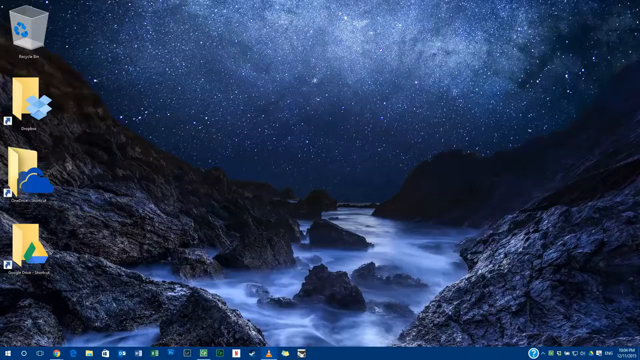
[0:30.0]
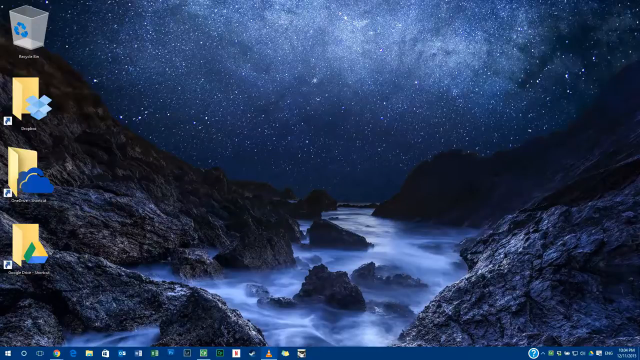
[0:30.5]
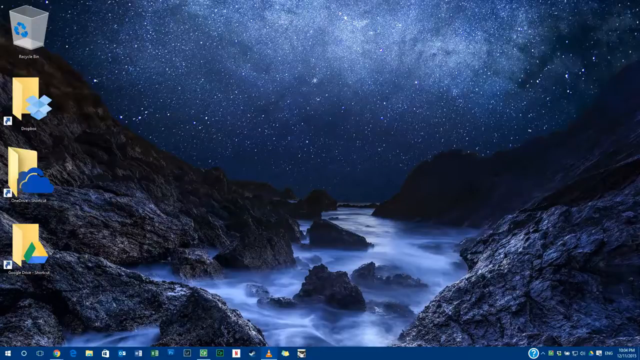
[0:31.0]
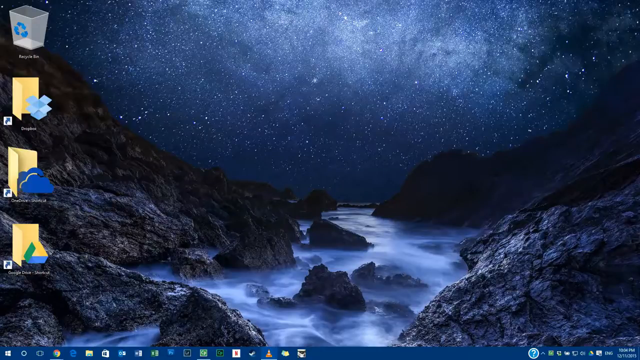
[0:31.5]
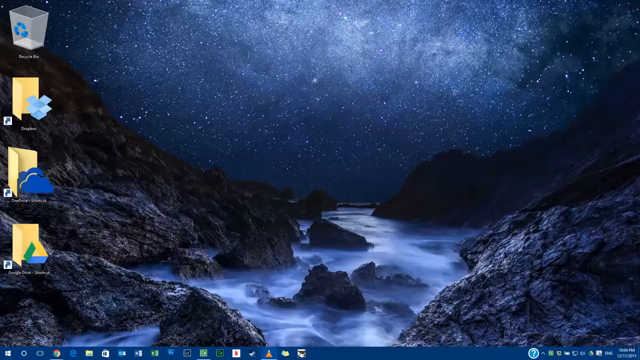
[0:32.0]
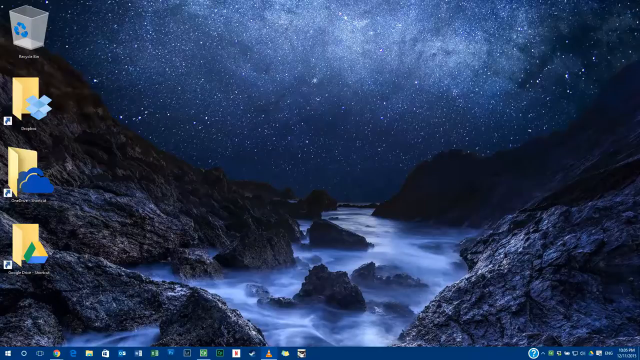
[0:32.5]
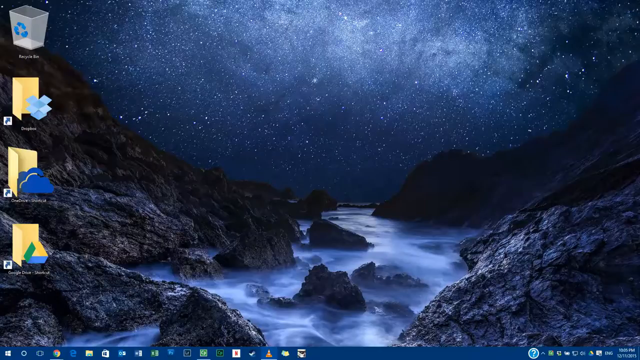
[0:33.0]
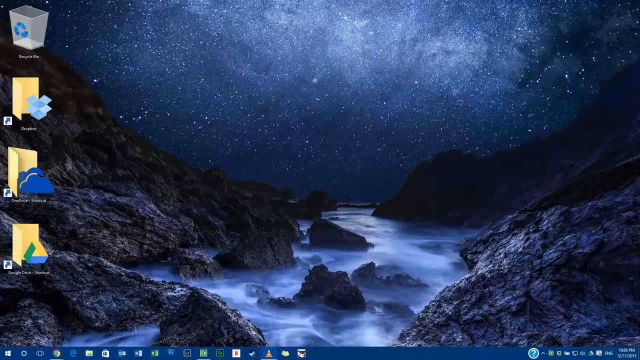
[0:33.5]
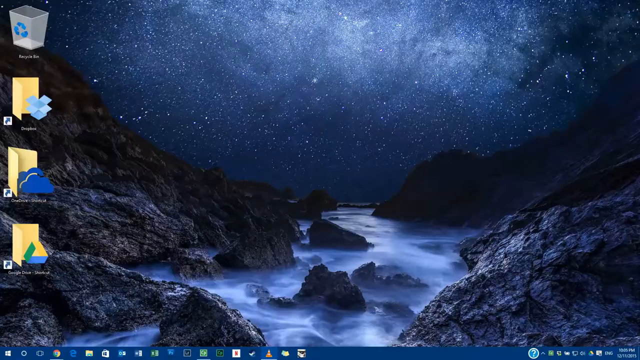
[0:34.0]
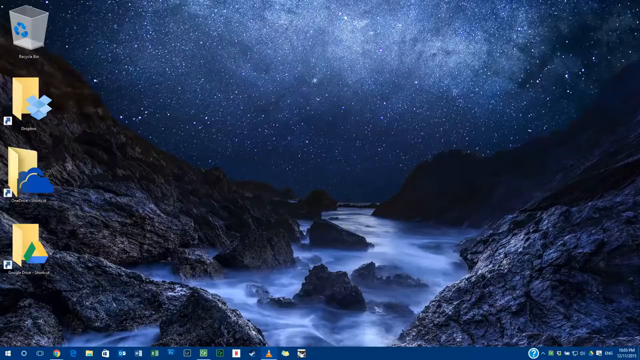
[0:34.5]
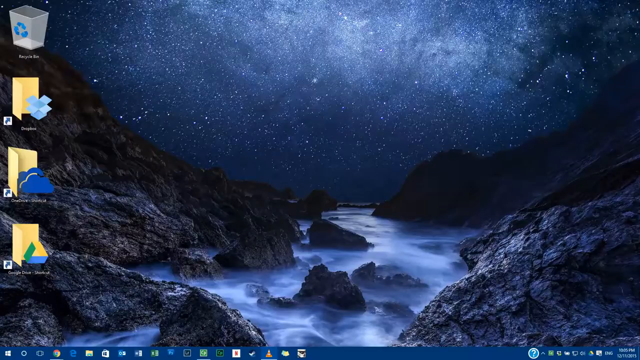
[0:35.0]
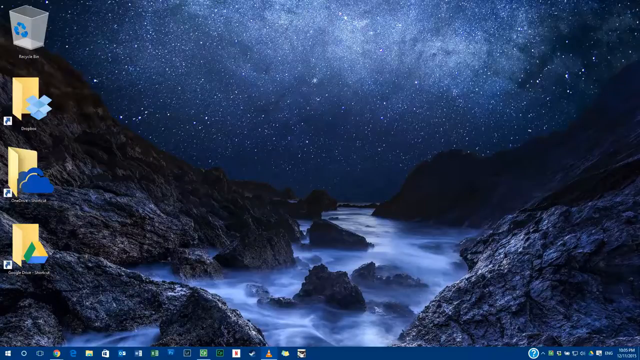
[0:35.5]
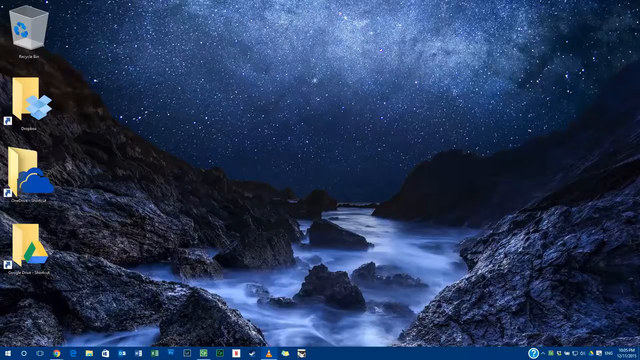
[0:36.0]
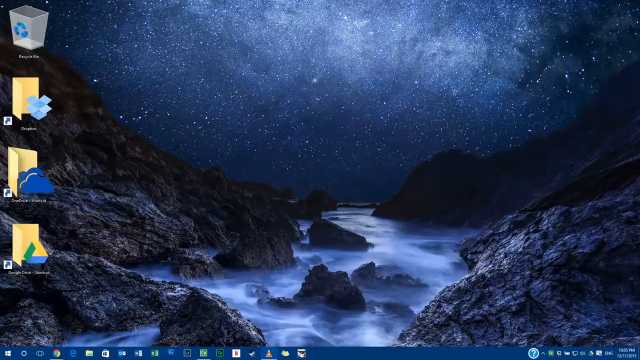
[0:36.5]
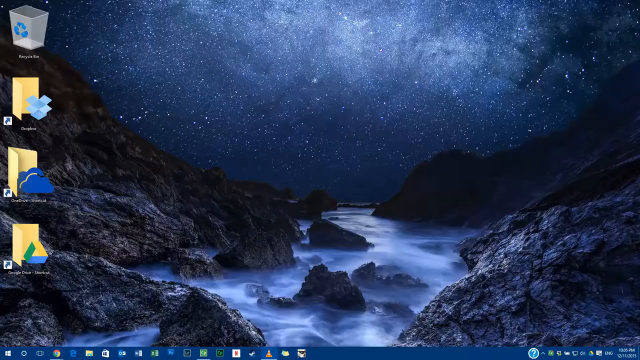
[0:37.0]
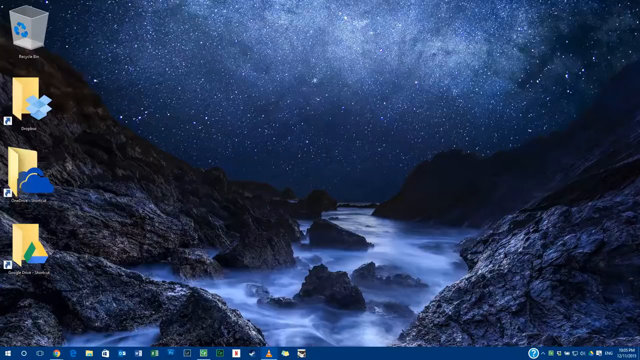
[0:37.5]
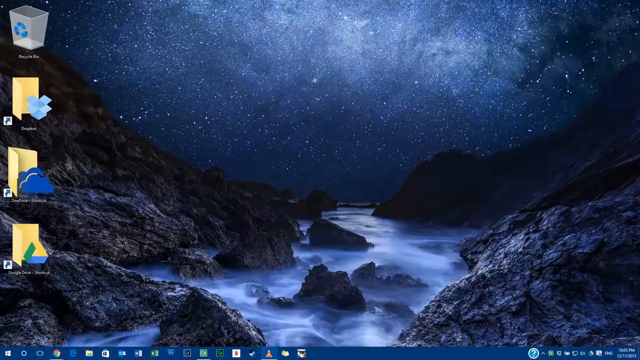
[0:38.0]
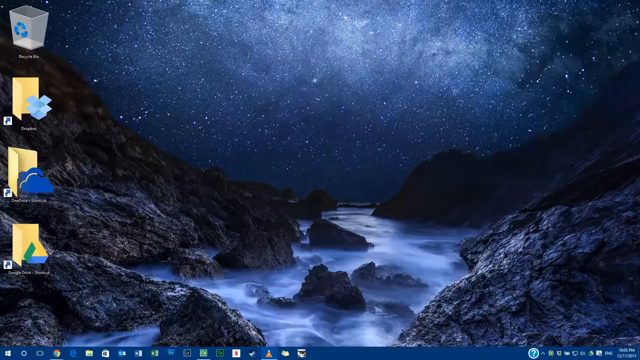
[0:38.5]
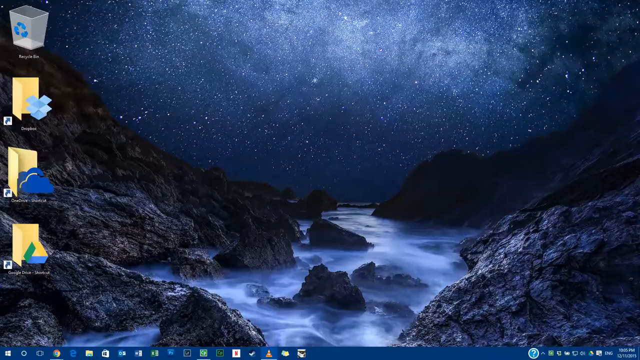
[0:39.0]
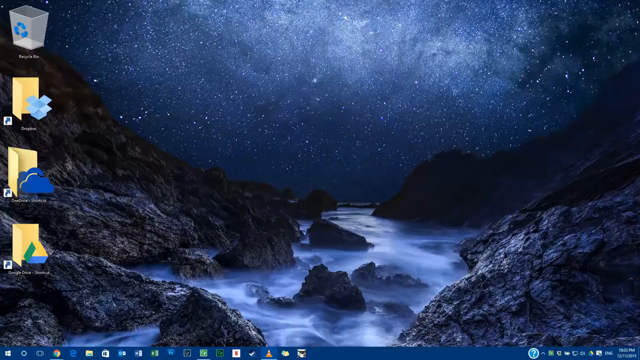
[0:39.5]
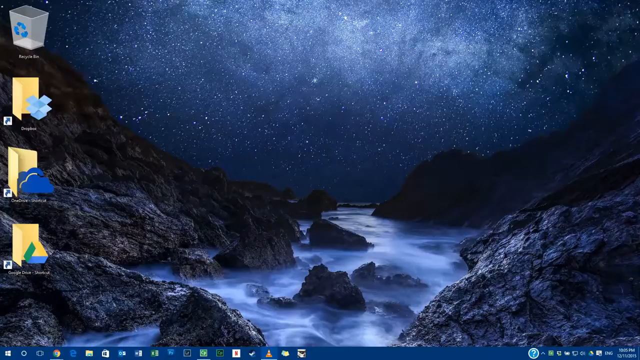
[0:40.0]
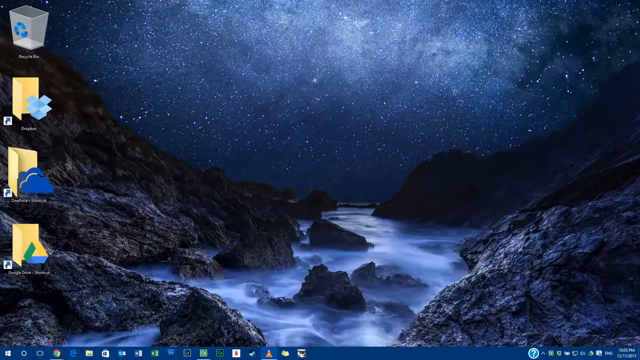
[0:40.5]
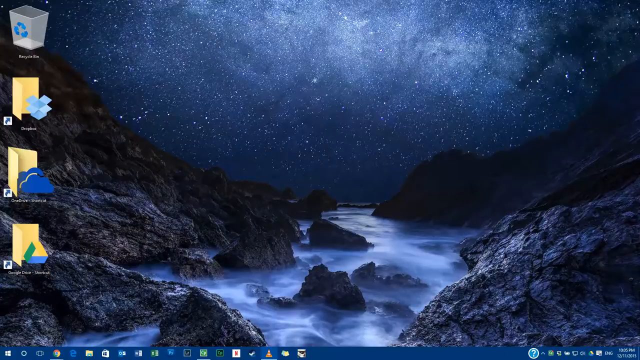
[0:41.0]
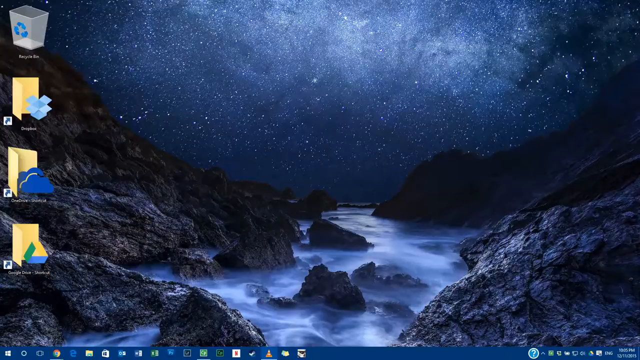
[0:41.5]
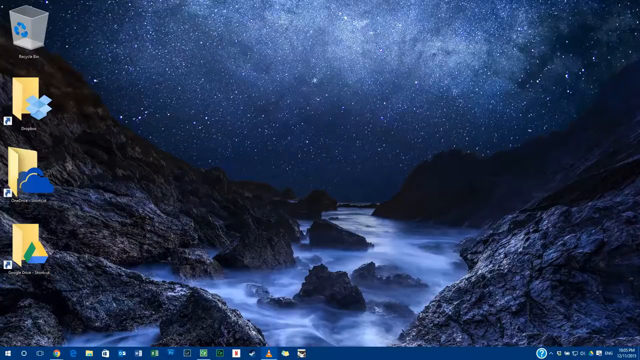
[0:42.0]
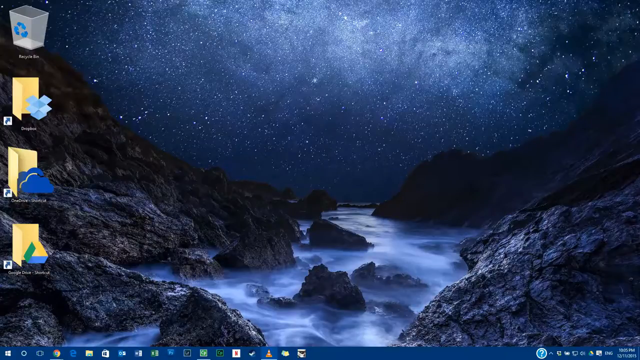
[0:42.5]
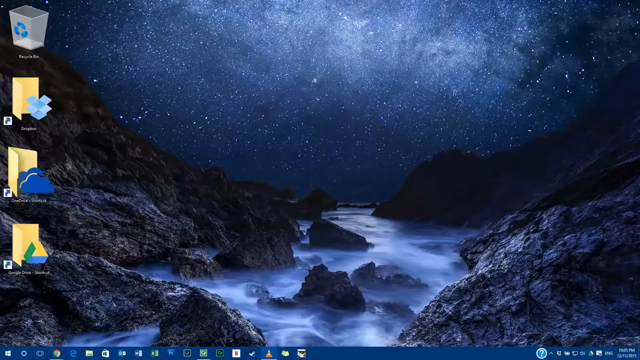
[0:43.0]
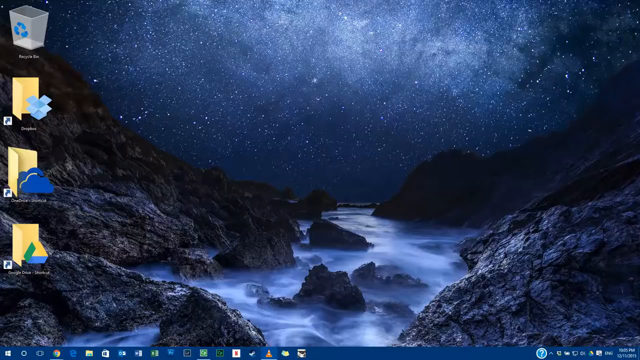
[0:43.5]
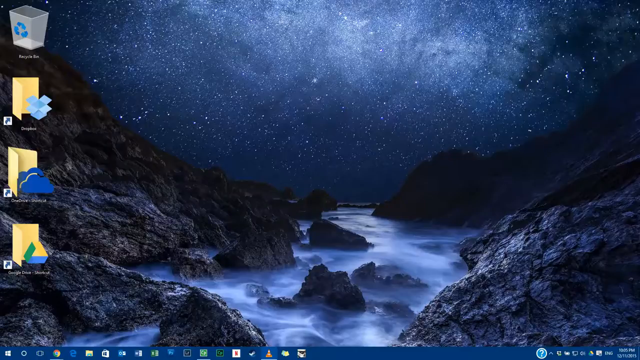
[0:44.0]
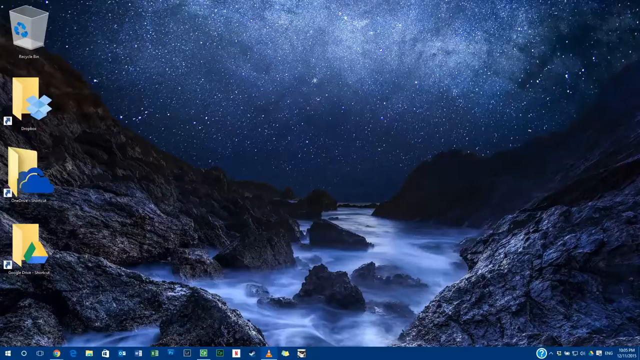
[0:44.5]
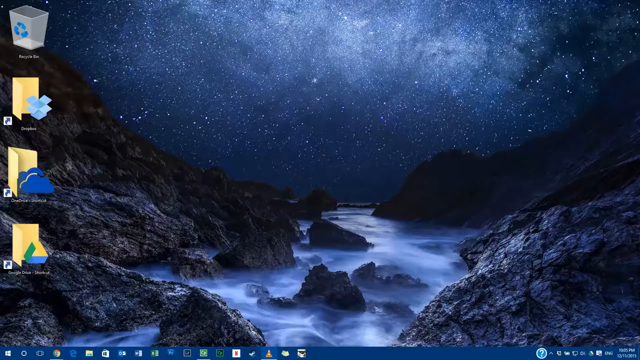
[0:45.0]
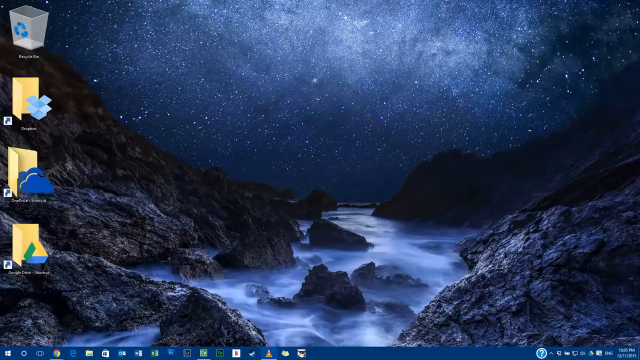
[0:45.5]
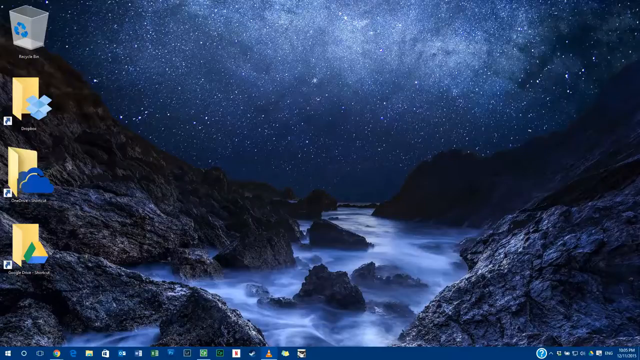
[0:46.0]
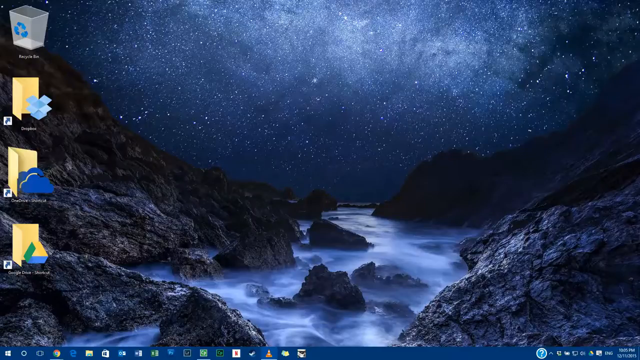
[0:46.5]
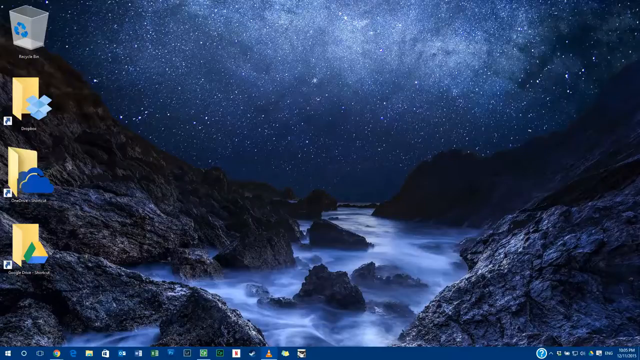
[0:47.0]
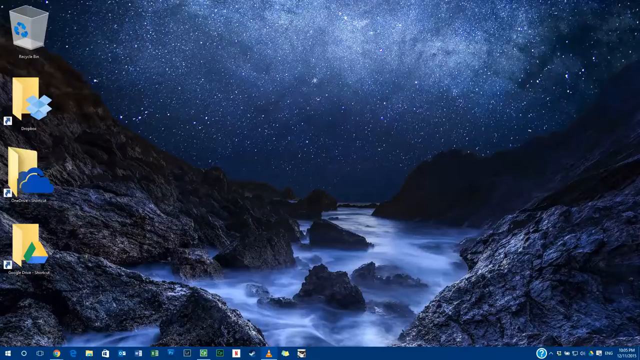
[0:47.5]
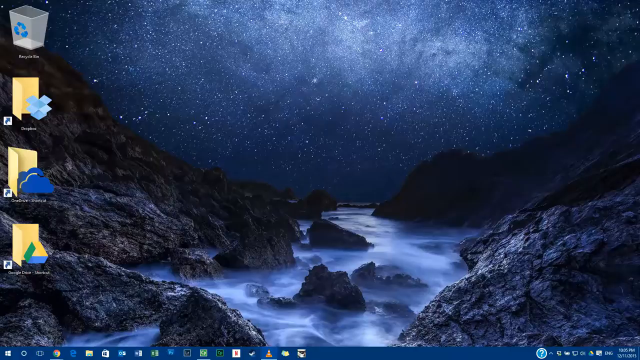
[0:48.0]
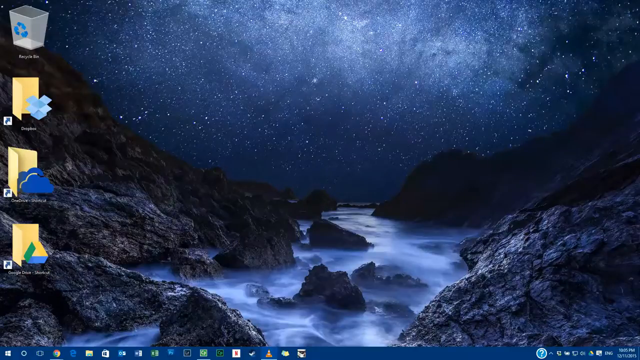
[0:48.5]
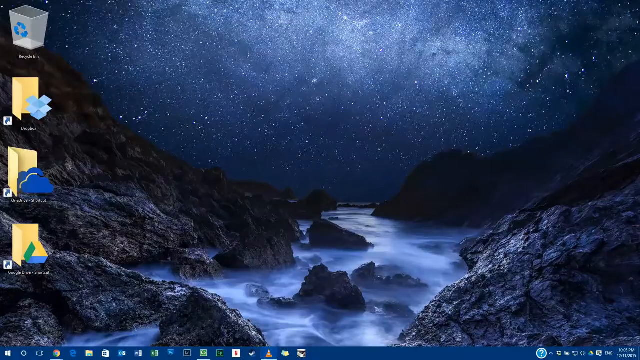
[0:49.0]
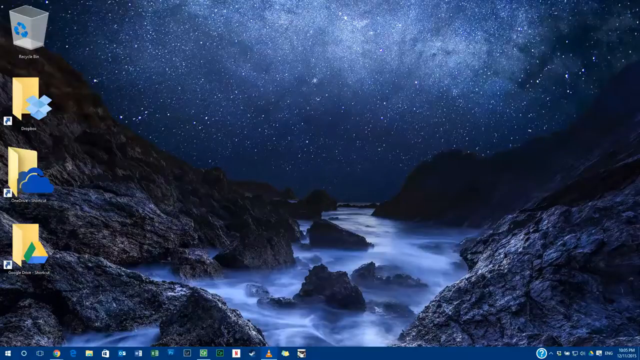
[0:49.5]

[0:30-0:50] The background shows a starry sky and mountains, with water flowing through a river and splashing against rocks on the ground. The scene looks very natural. Stars fill the sky, and there is darkness around the mountains, with black areas on the screen.